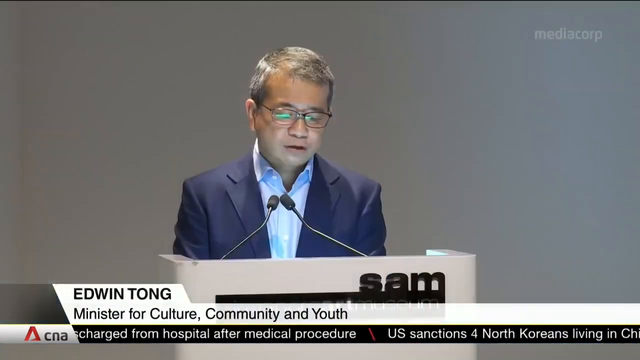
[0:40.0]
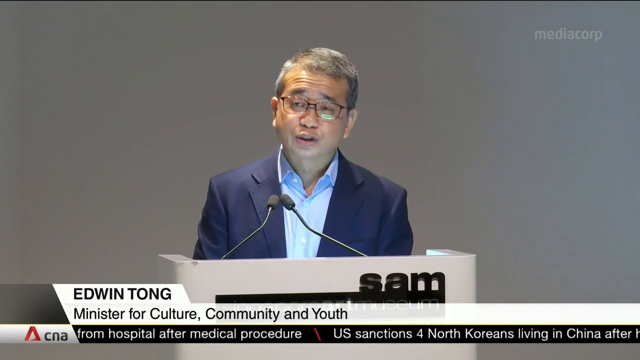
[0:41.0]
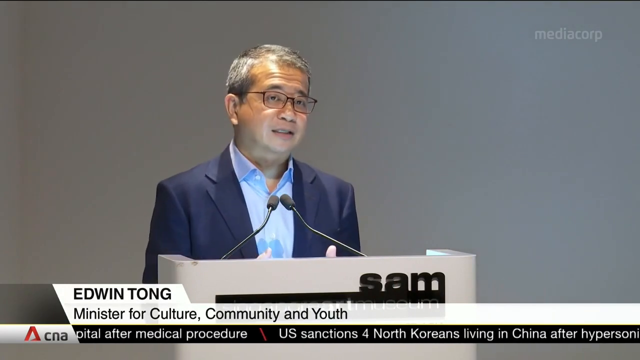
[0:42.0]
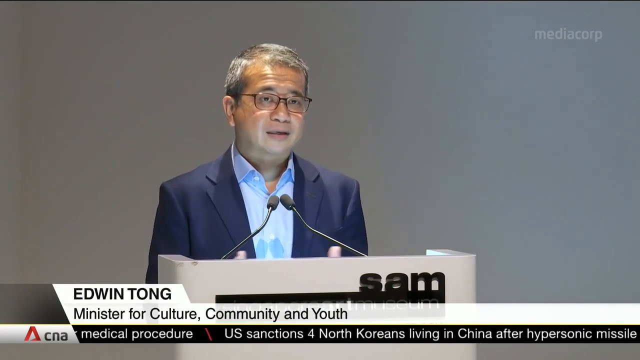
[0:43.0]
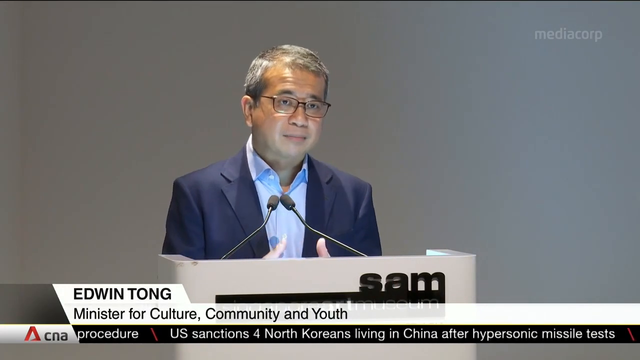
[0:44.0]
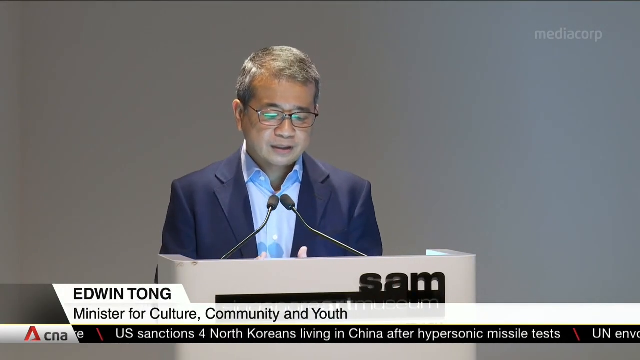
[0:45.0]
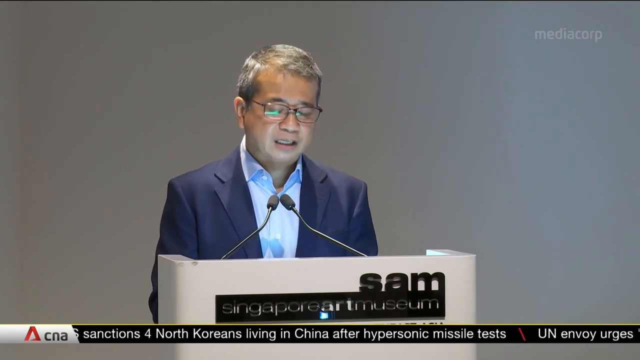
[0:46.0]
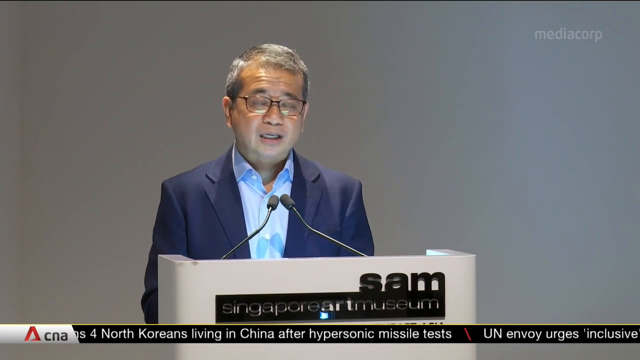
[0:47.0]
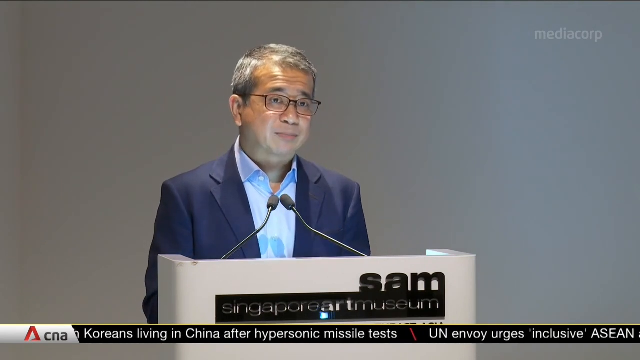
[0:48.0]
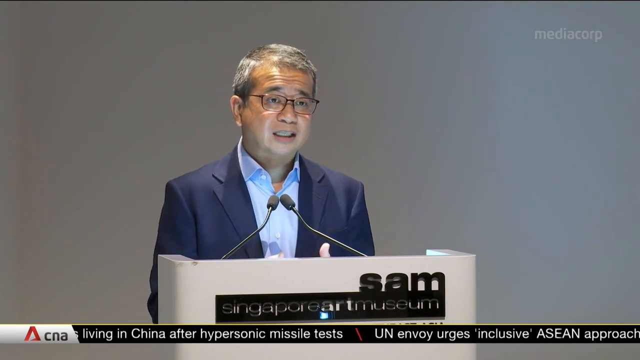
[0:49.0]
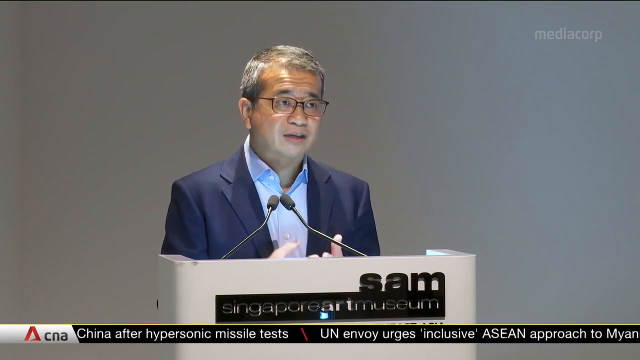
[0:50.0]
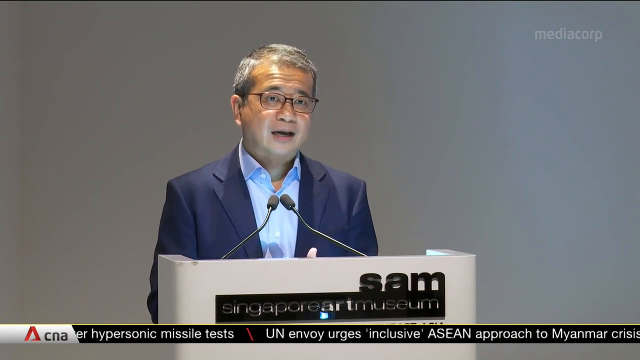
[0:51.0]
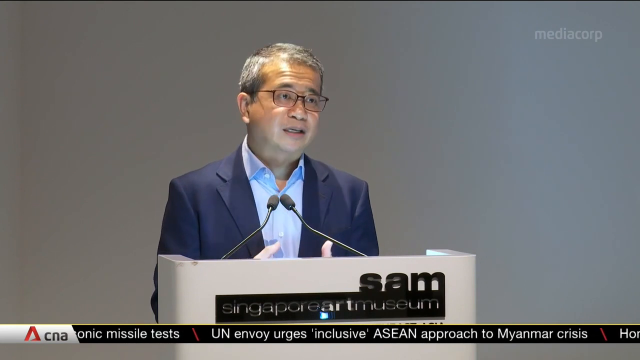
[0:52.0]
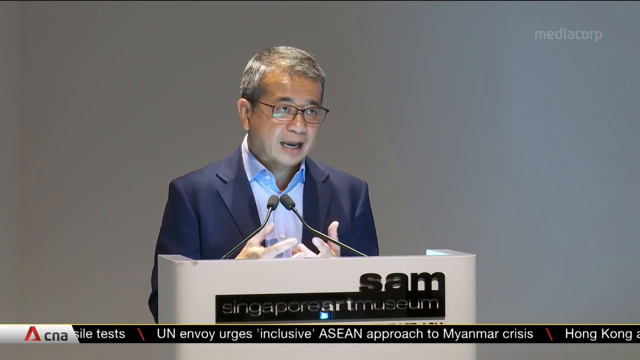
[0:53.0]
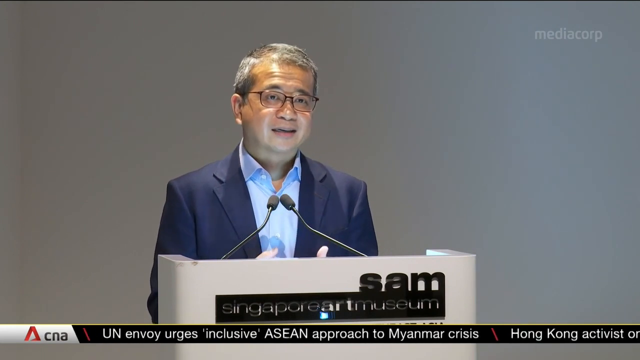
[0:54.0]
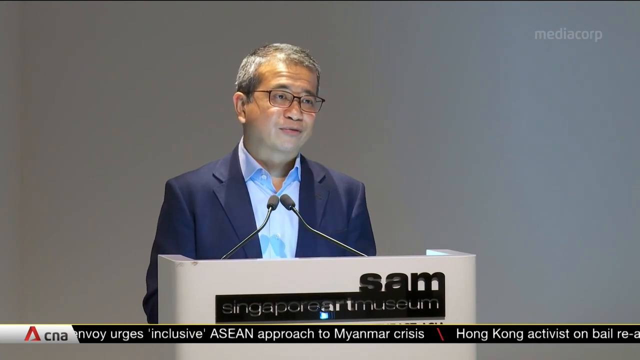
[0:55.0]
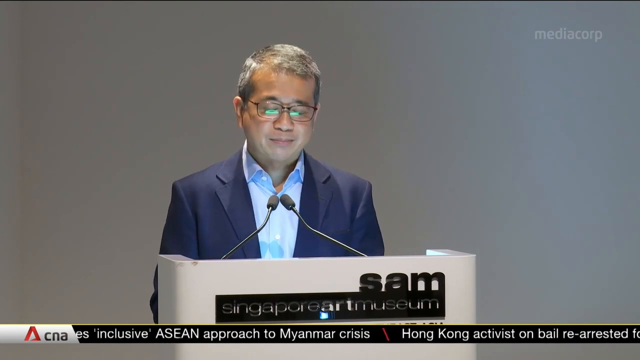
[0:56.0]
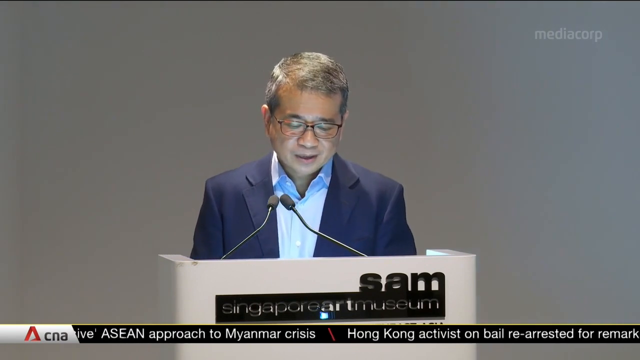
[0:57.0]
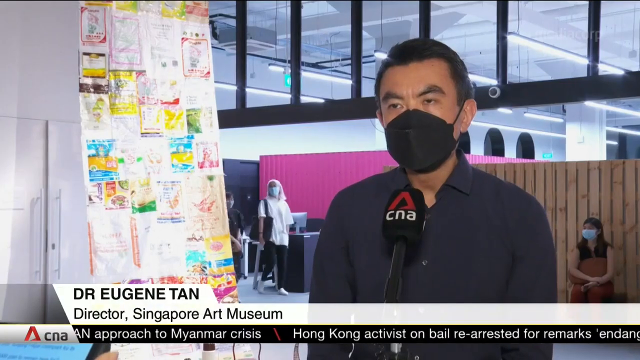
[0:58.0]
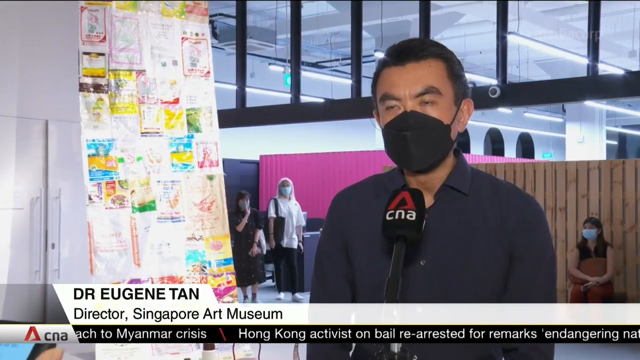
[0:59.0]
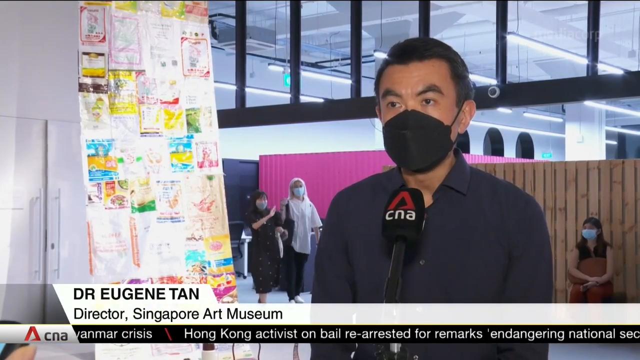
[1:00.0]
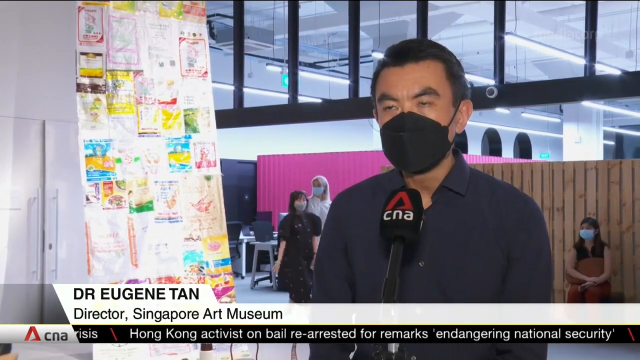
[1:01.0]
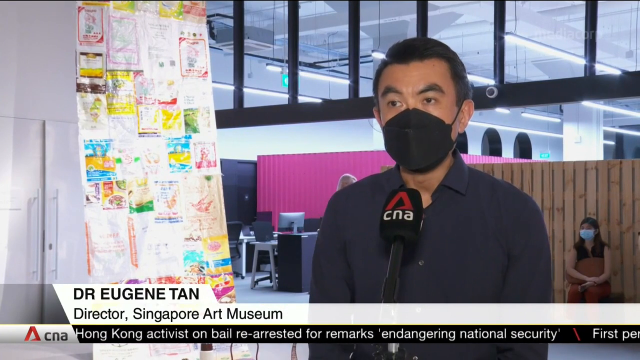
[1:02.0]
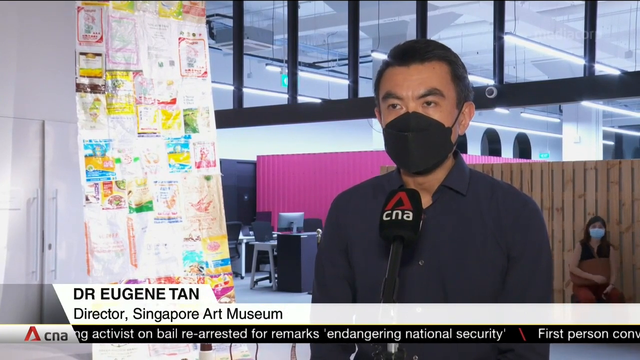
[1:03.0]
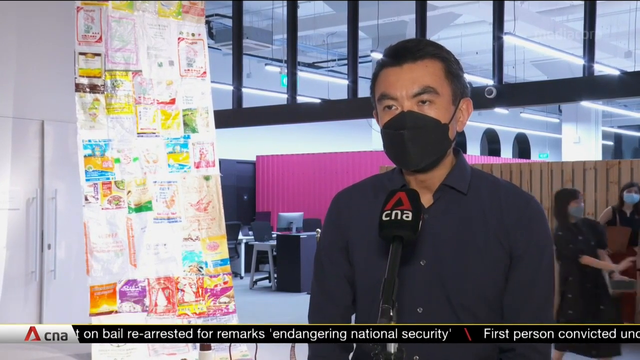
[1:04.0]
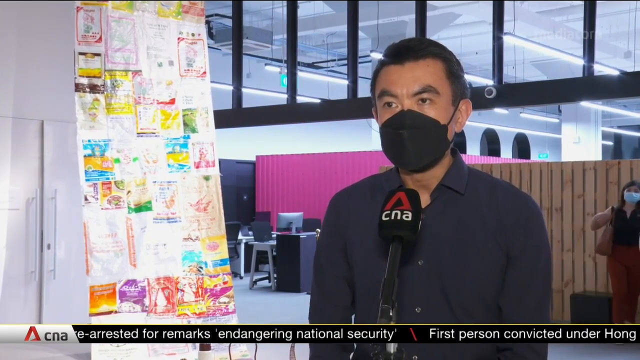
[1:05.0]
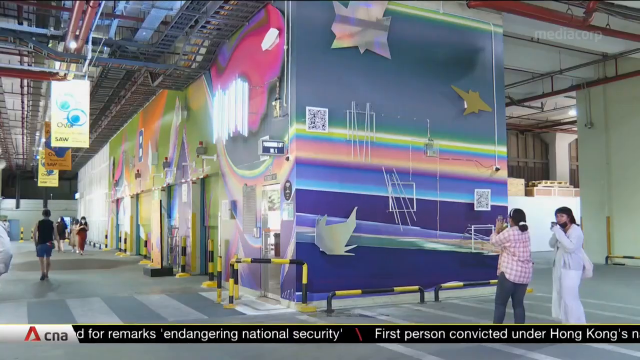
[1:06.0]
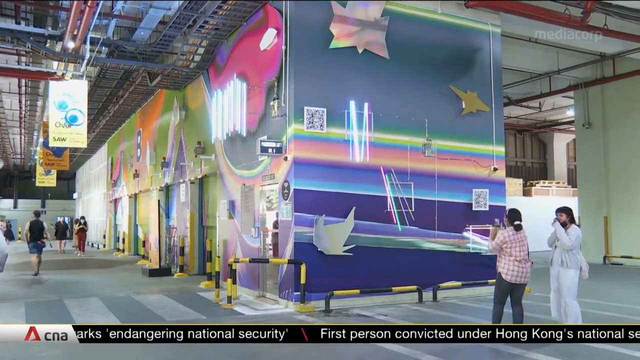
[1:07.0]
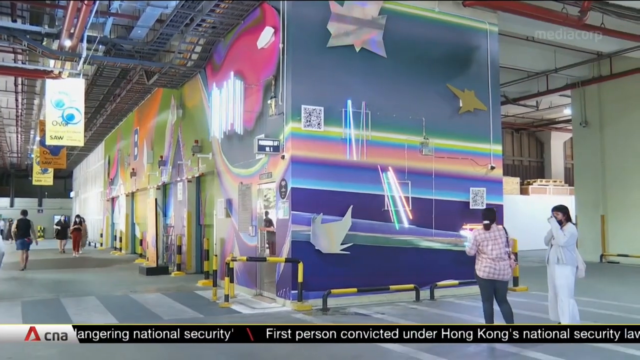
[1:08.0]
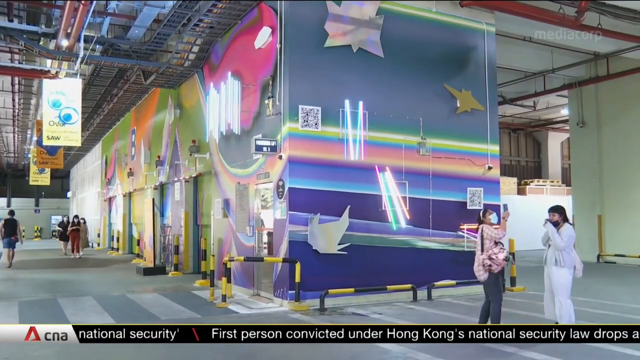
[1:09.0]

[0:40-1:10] A man stands at a podium that reads "sam singapore art museum". He is Asian, probably in his late 40s or early 50s, with short, peppered hair, and he wears brown glasses, a dark blue suit and a light blue button-down shirt. Text at the bottom reads "Edwin Tong, Minister for Culture, Community and Youth." A ticker tape along the bottom of the screen reads "Hong Kong activists on bail re-arrested for remarks endangering national security", among other topics. Next, a man in black with a black mask and short hair, possibly in his 40s, talks with the museum and some art exhibits in the background. A room in the museum is then shown with people wearing masks walking around. The walls are colorfully painted with items hanging from them, and banners hang from the exposed ceilings.